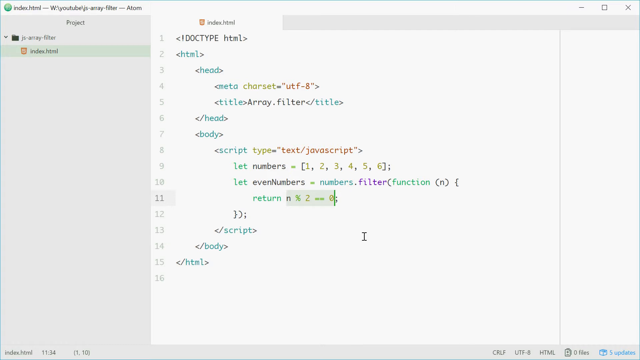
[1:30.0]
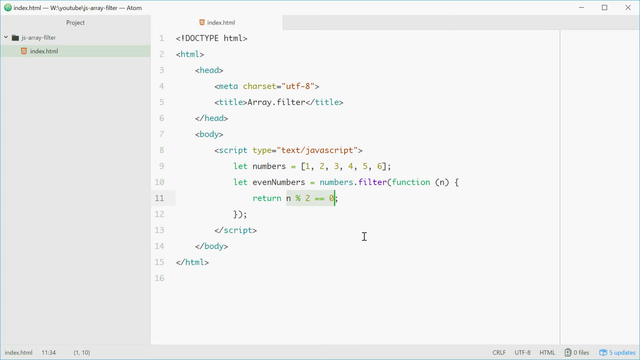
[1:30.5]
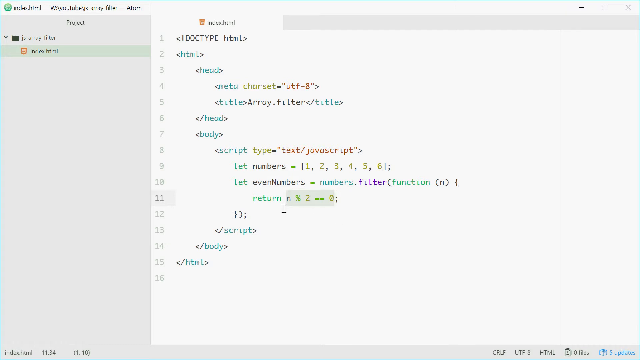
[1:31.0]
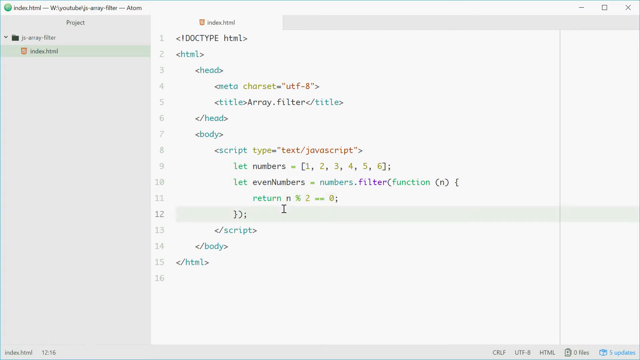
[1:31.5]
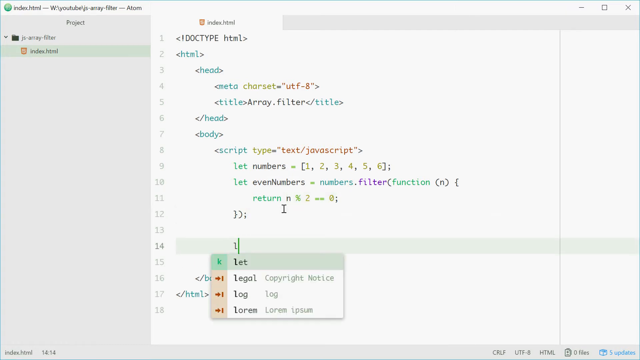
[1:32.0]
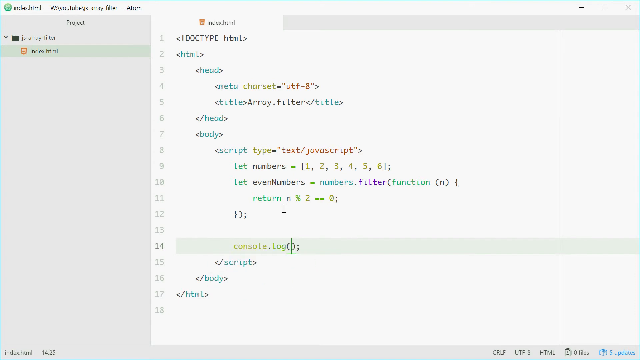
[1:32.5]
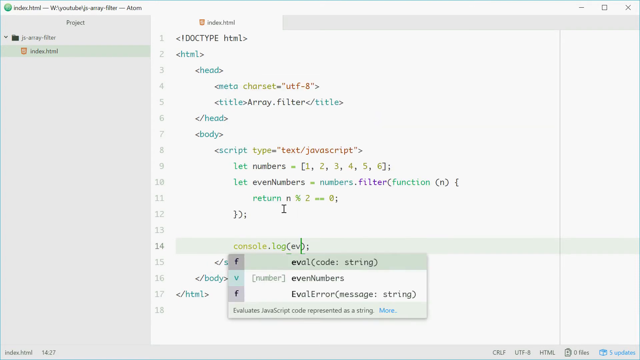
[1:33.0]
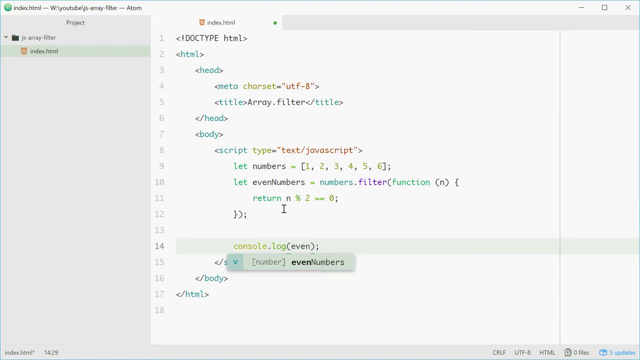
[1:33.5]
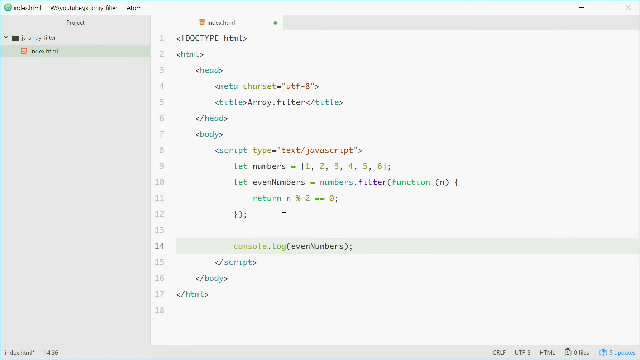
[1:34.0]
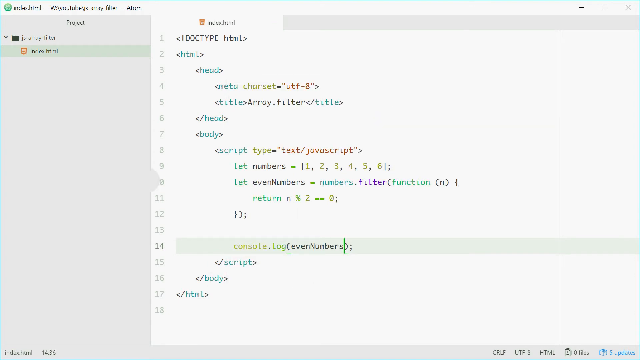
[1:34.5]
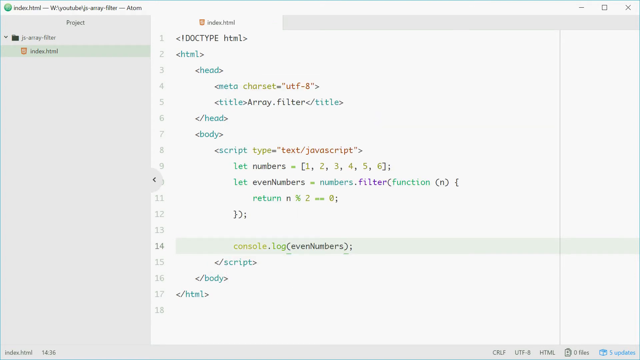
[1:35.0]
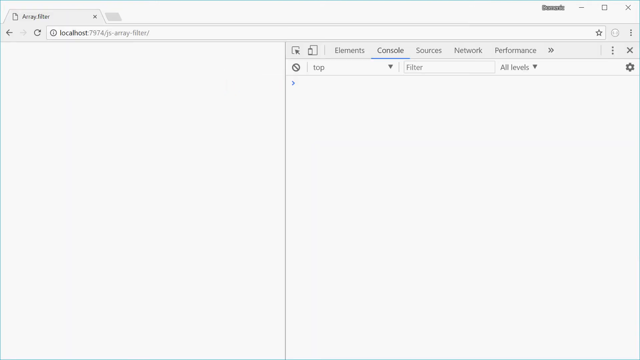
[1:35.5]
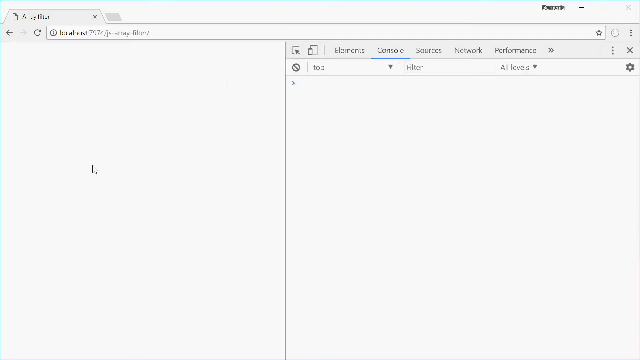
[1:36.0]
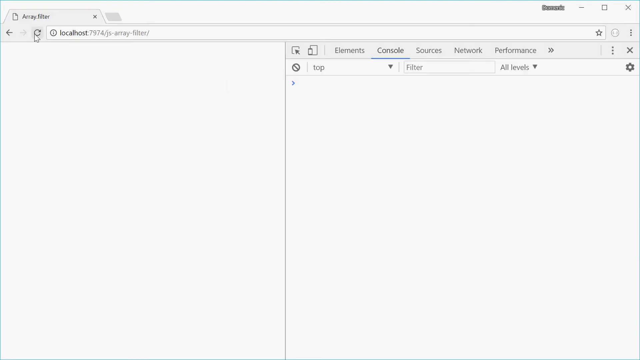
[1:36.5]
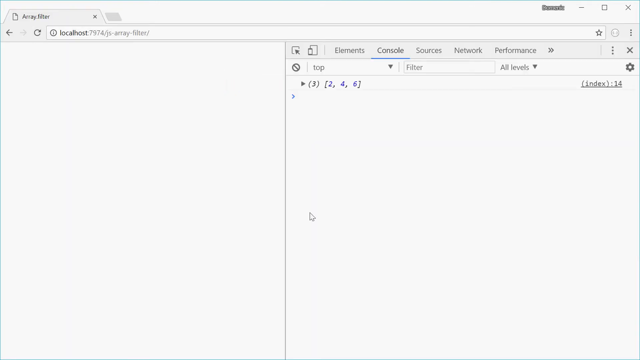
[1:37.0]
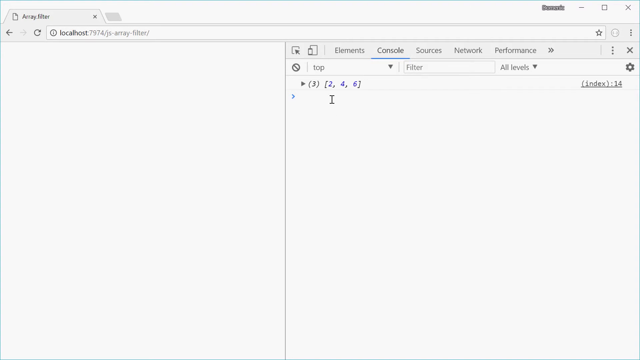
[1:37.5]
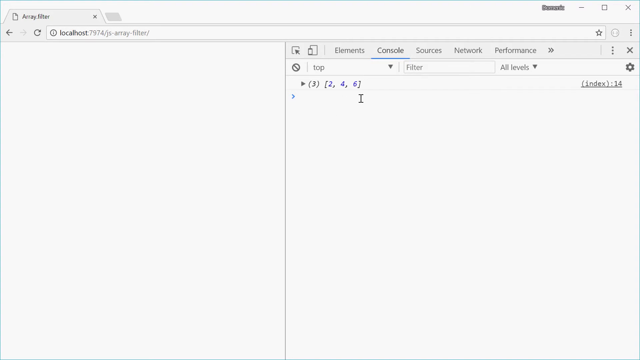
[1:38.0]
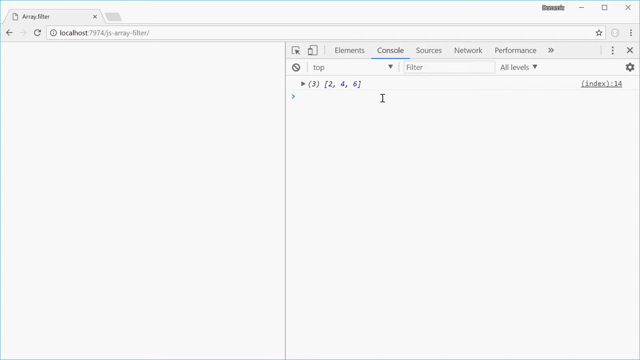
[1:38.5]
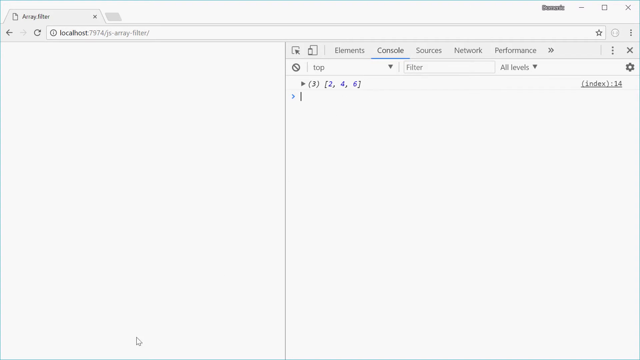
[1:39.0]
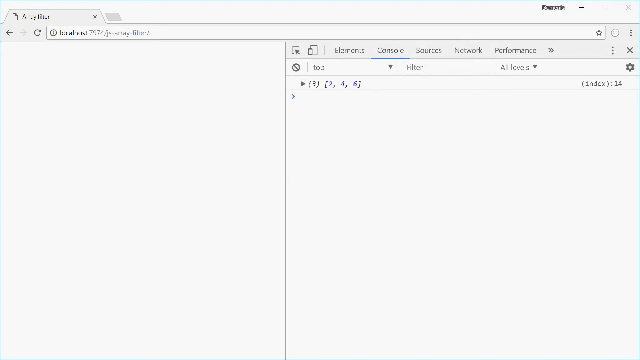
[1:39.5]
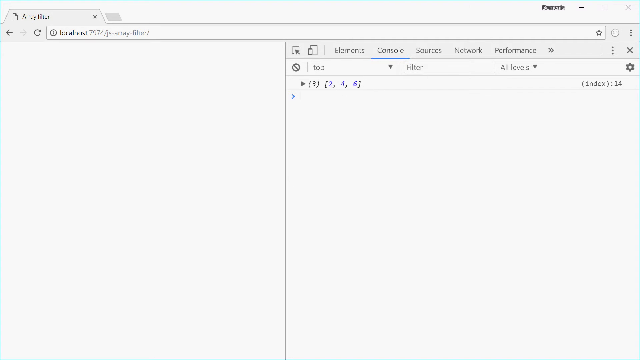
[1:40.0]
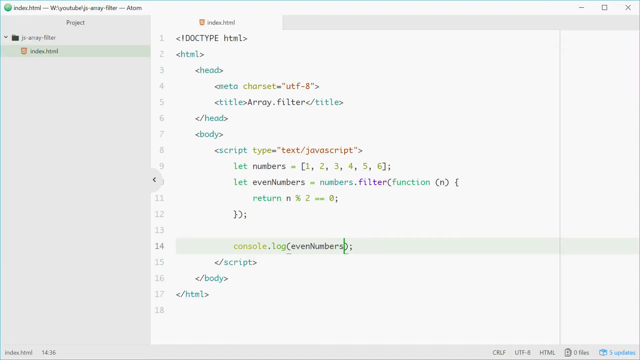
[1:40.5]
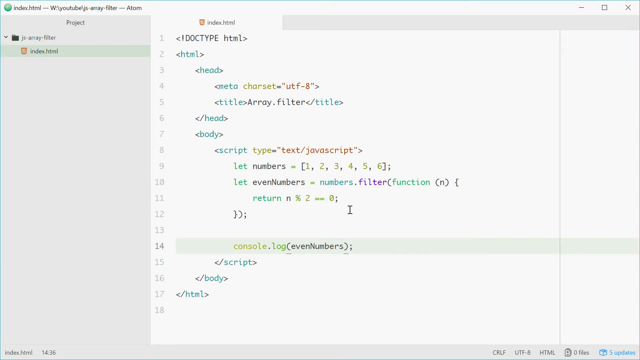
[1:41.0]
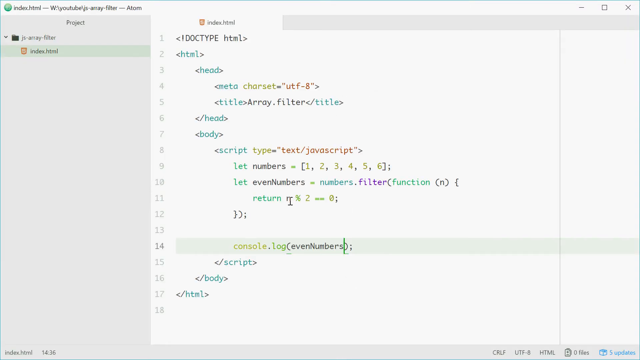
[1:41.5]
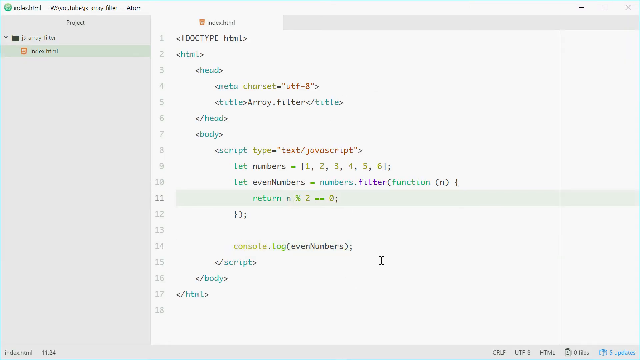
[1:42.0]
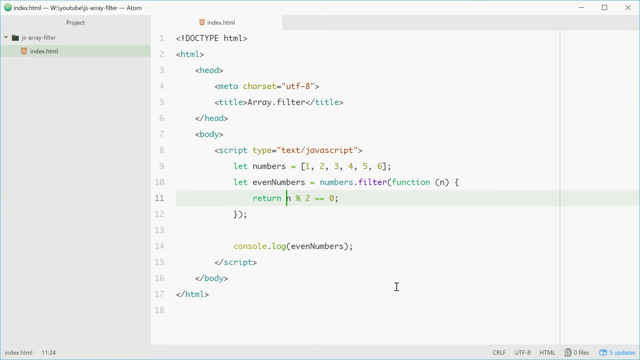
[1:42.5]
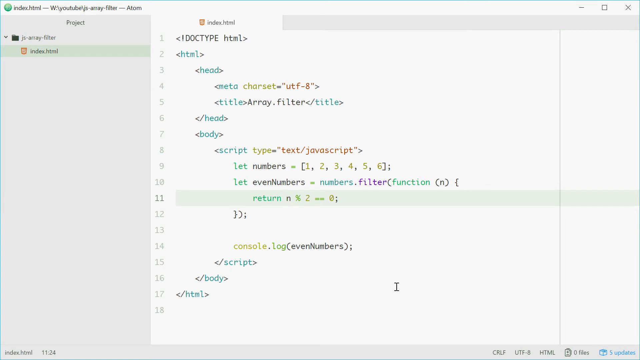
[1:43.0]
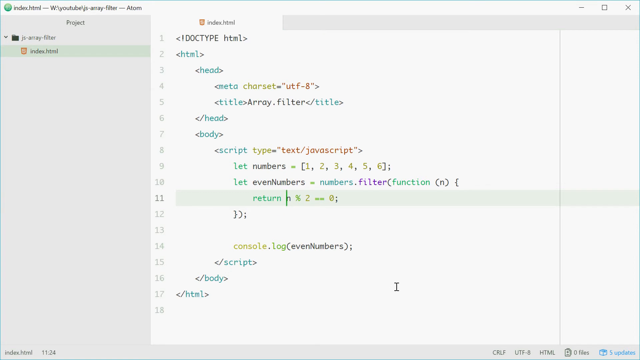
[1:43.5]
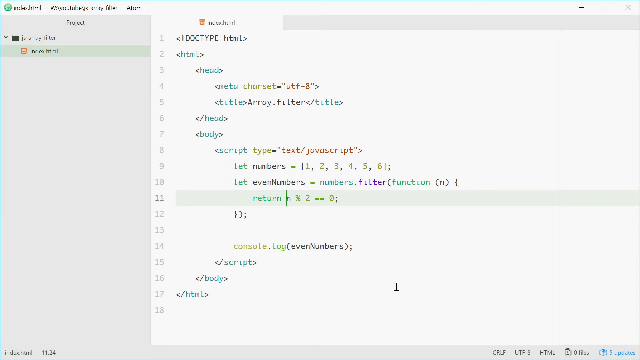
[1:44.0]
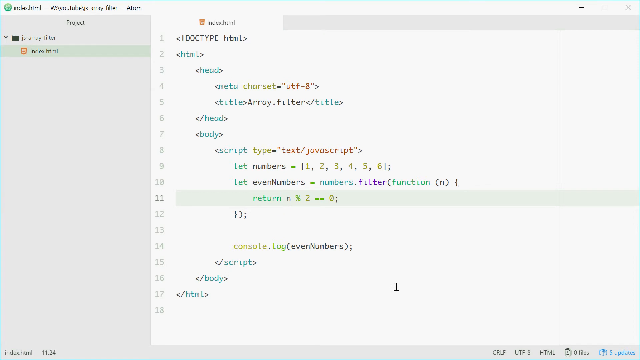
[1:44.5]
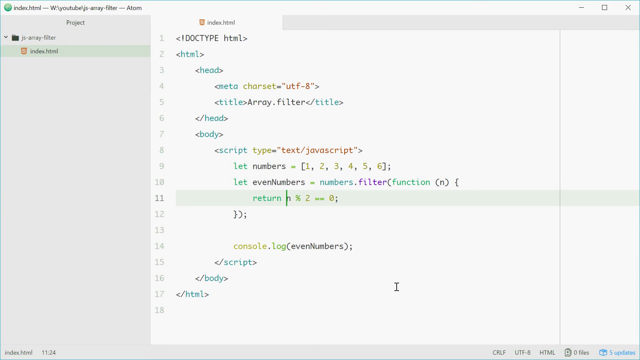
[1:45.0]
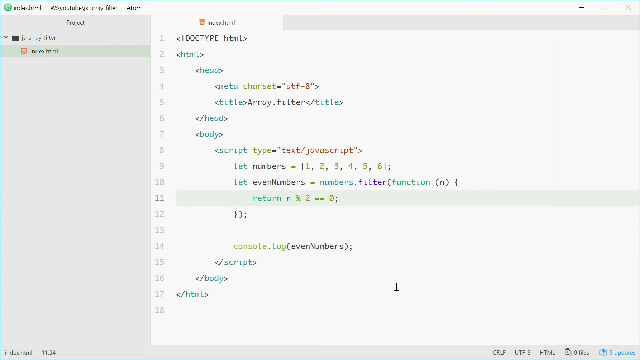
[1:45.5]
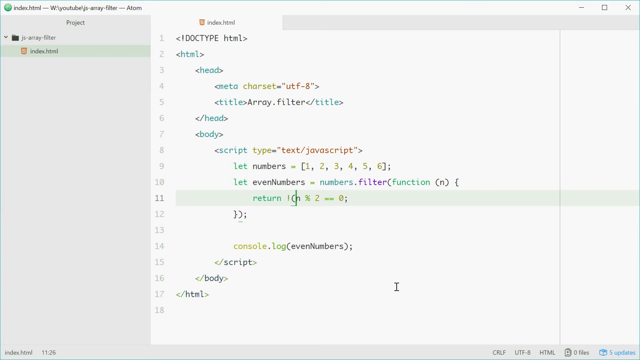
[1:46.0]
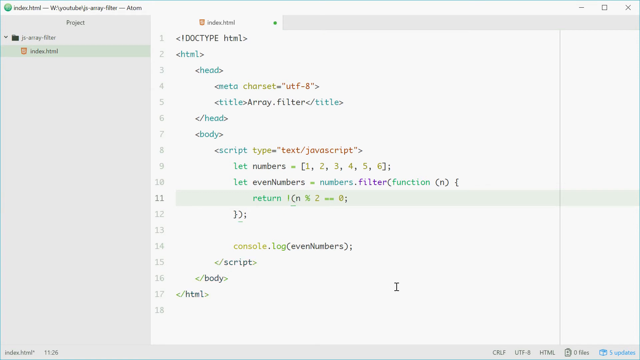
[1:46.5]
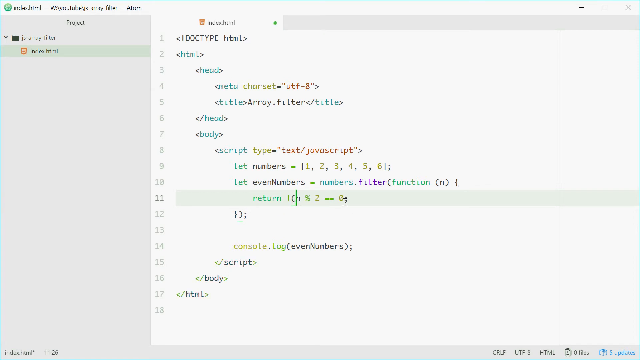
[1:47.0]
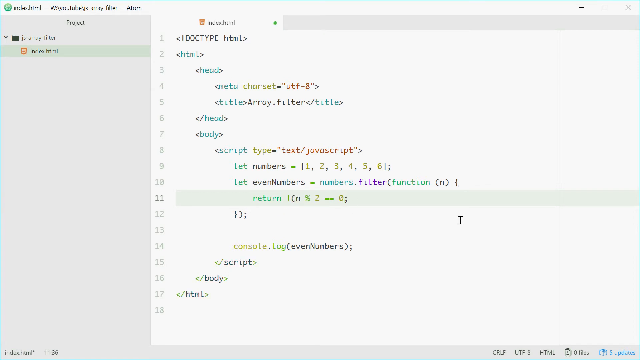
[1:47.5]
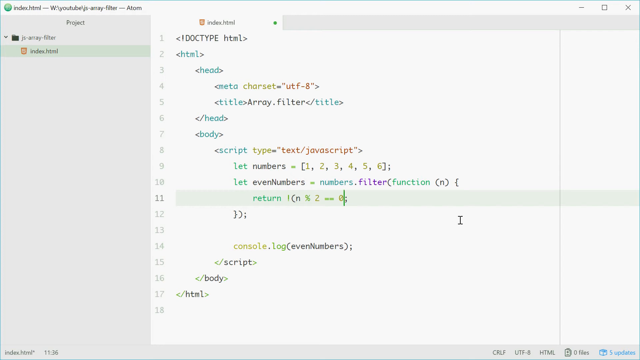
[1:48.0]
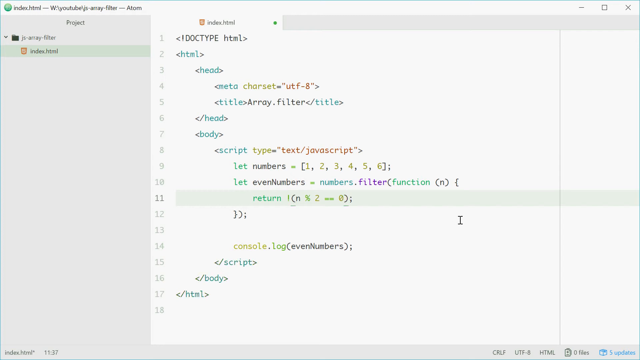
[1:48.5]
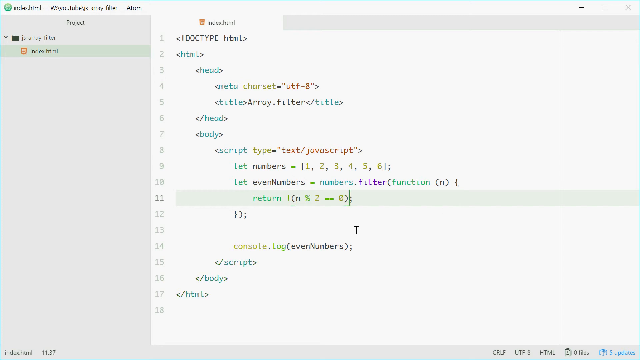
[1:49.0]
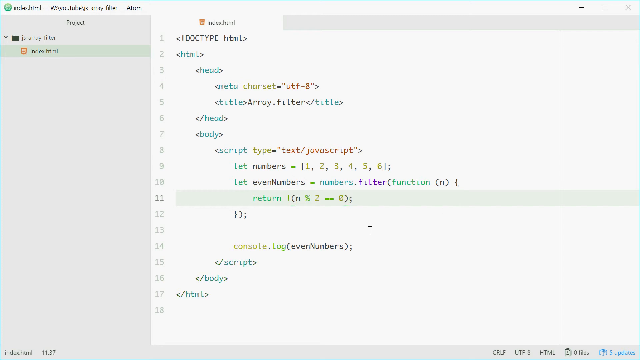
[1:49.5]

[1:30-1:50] On line 14 the person types "console.log(even", and a drop-down message appears below containing "number" in square brackets and "evenNumbers", written as one word with a capital N; the line becomes "console.log(evenNumbers);". The person seems to press something that opens a page in a different application, then quickly returns to the script and adds an exclamation mark to the right of "return" on line 11. The other page, which kind of looks like Firefox, is blank, and its tab says "array.filter". The URL reads local host followed by some numbers. The person opens the inspect page function and types in 3, 2, 4, 6.